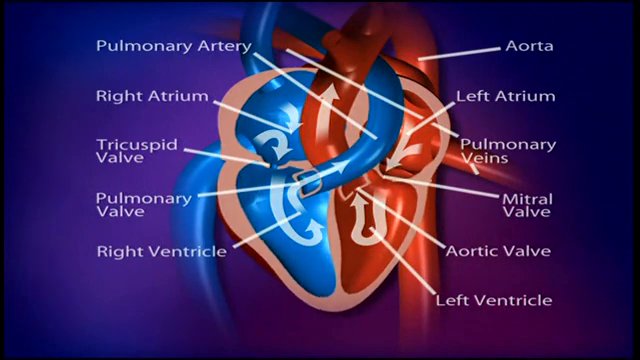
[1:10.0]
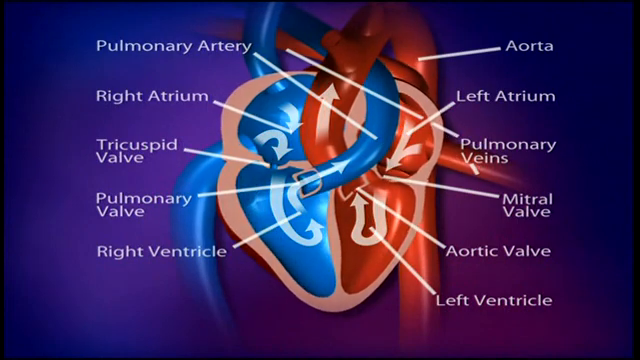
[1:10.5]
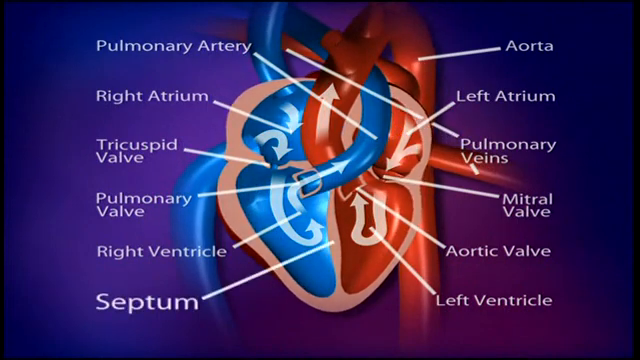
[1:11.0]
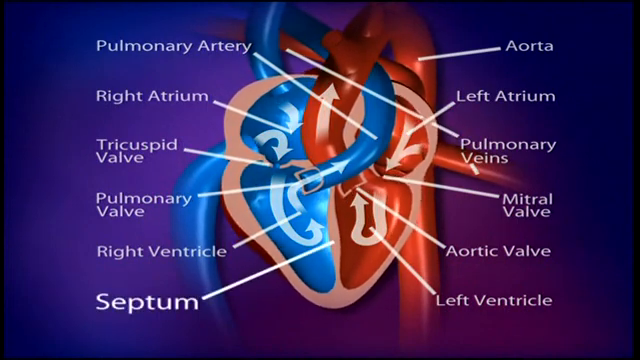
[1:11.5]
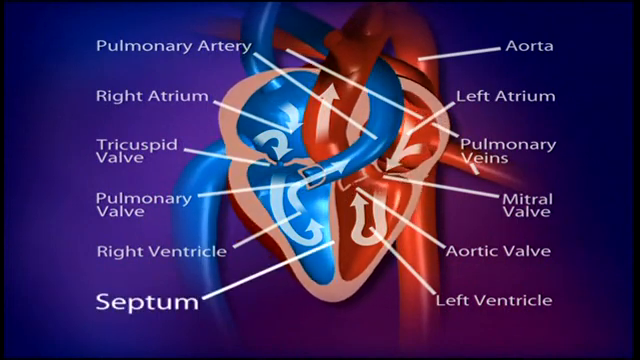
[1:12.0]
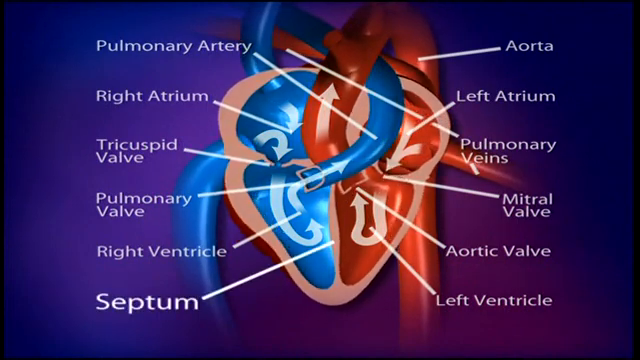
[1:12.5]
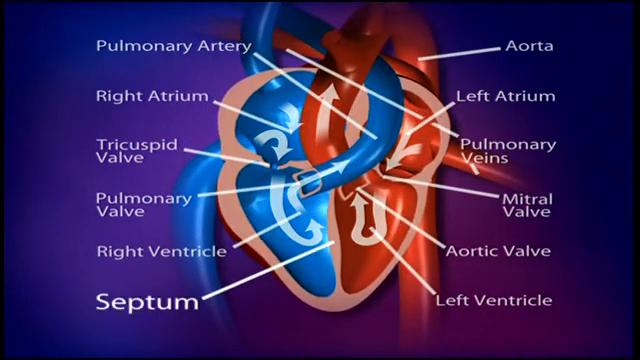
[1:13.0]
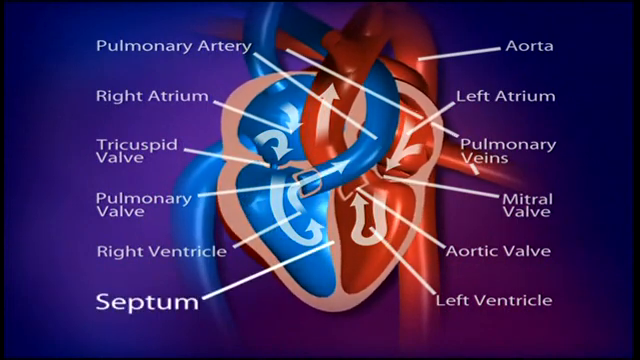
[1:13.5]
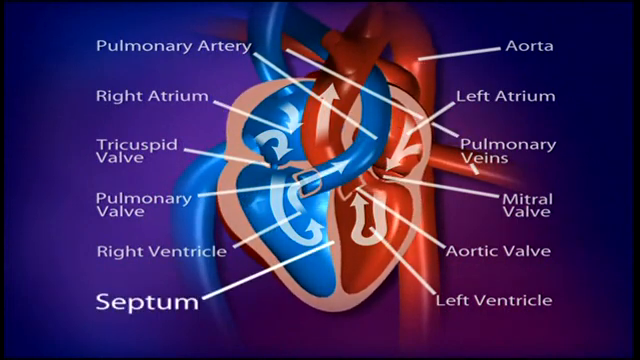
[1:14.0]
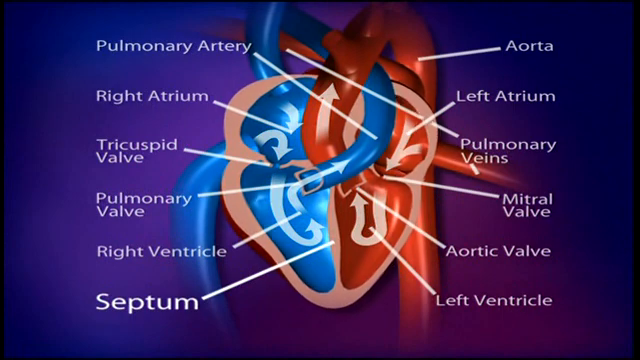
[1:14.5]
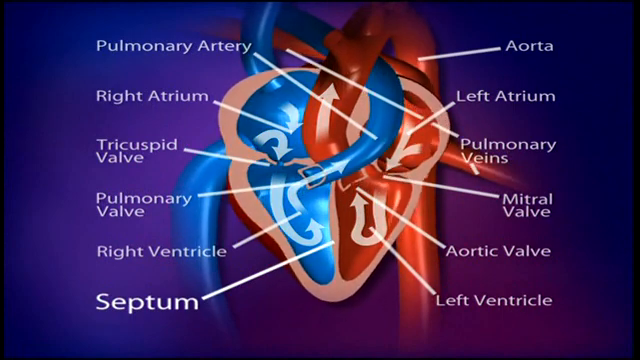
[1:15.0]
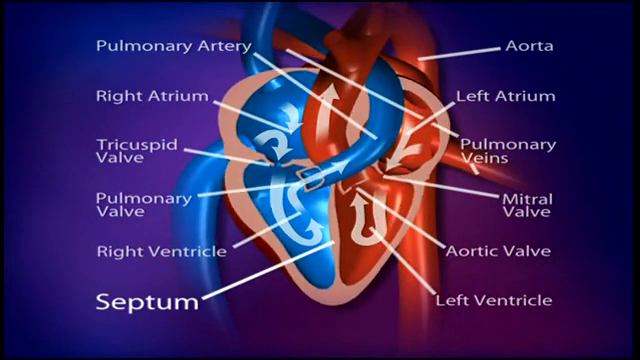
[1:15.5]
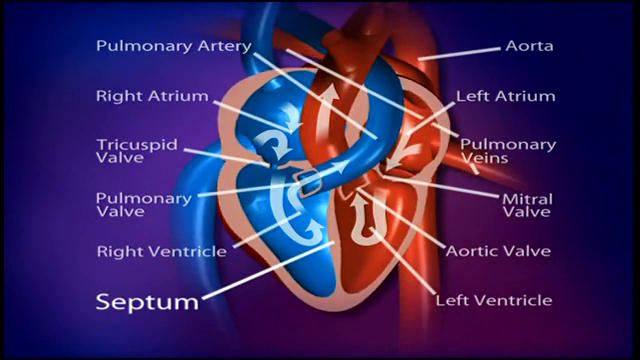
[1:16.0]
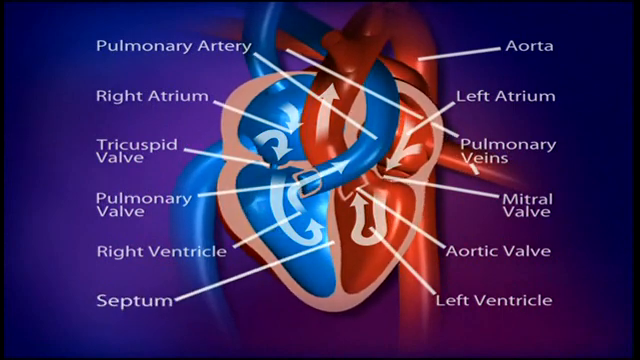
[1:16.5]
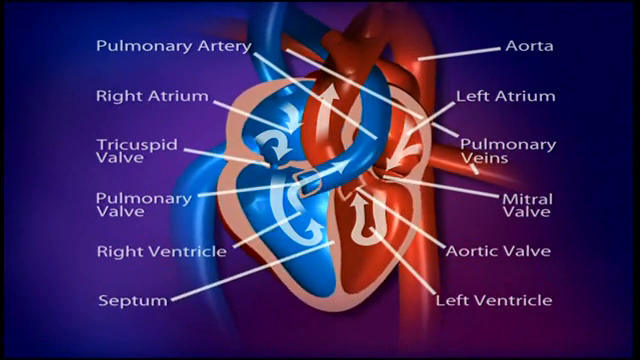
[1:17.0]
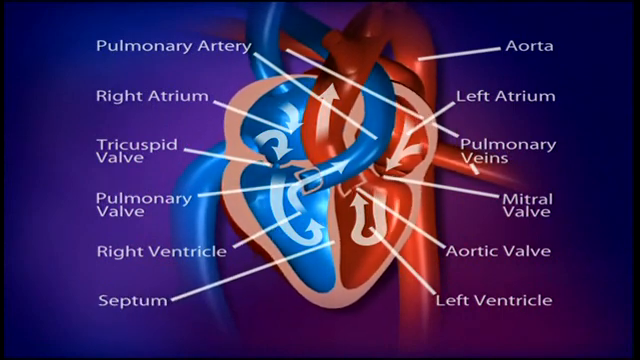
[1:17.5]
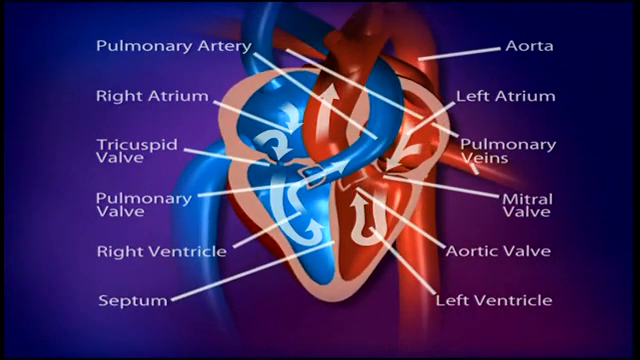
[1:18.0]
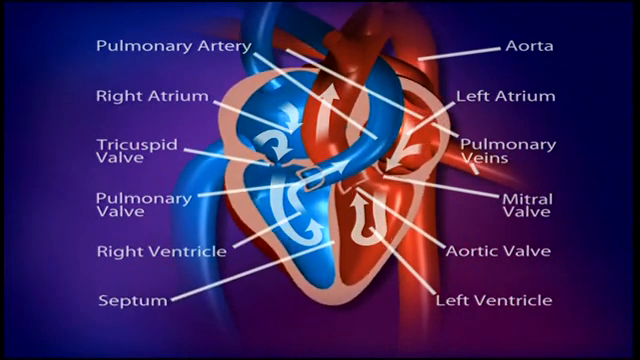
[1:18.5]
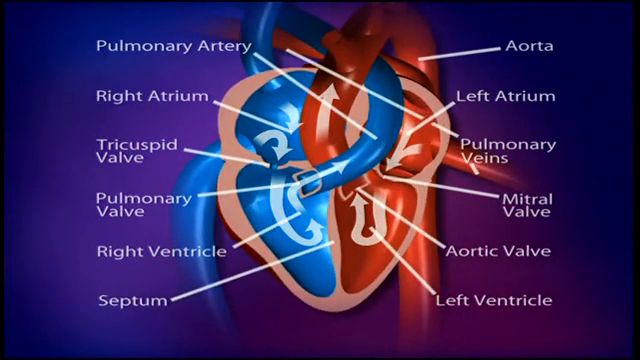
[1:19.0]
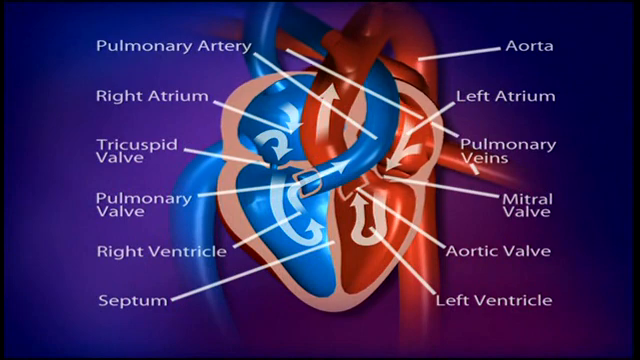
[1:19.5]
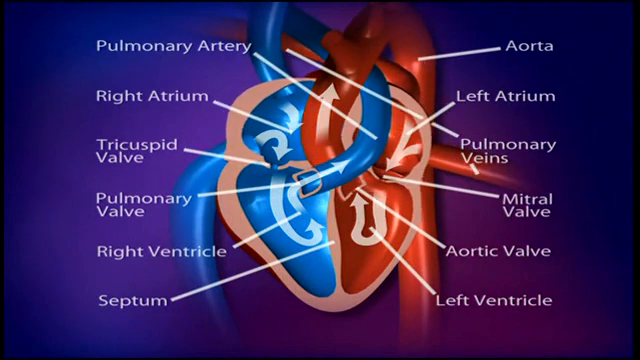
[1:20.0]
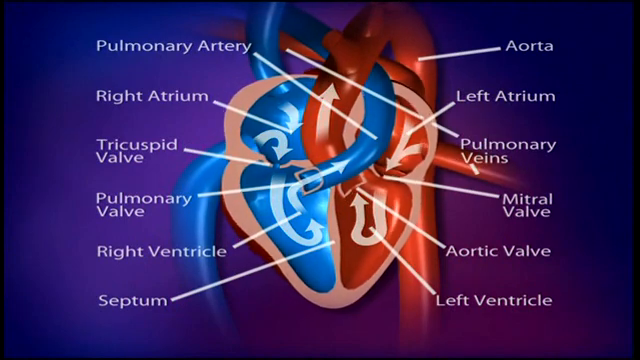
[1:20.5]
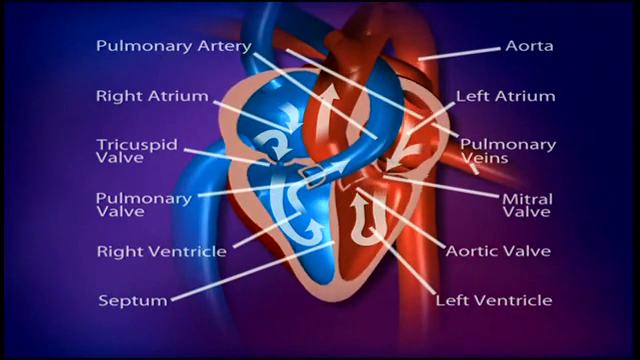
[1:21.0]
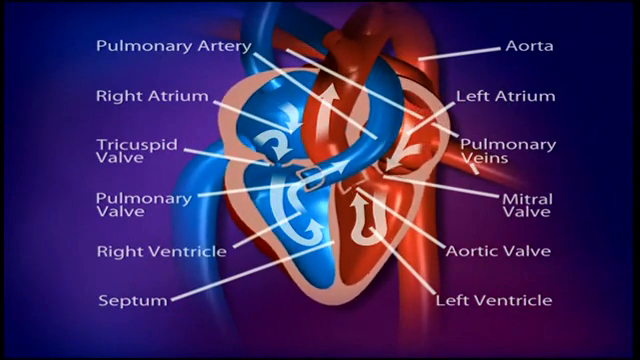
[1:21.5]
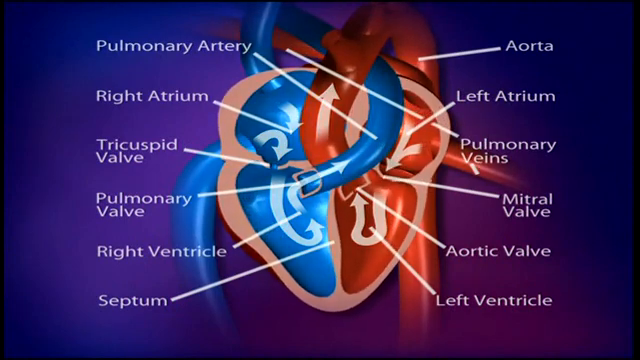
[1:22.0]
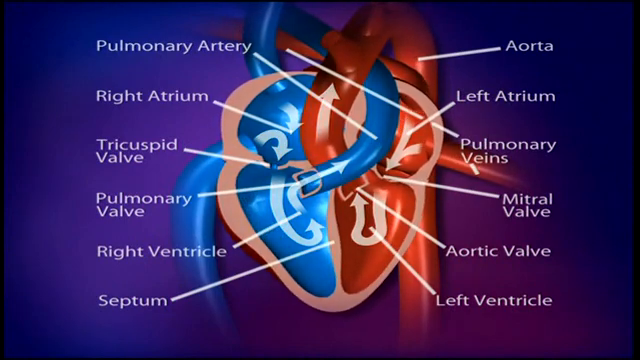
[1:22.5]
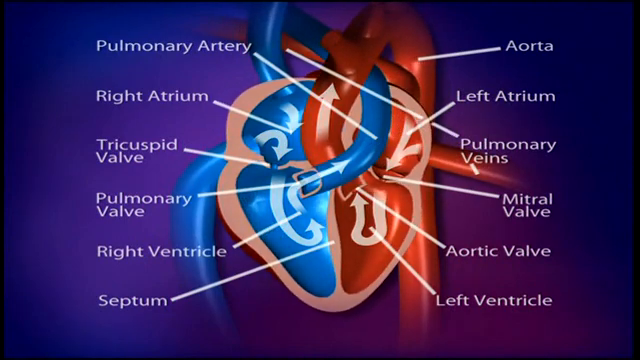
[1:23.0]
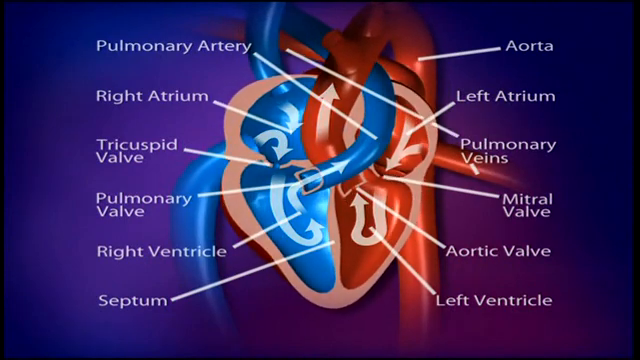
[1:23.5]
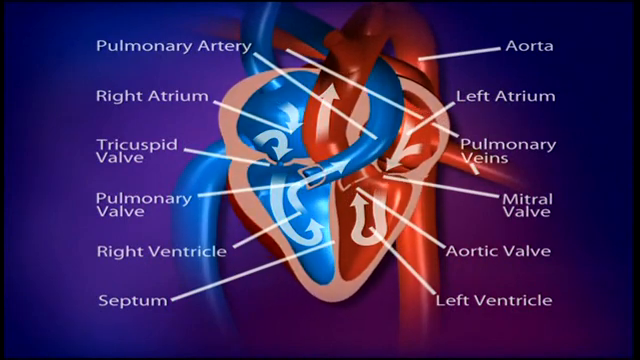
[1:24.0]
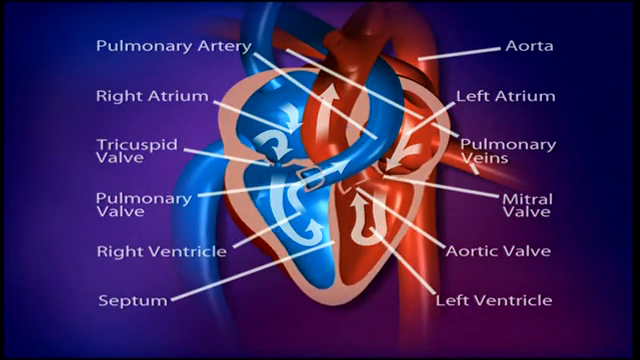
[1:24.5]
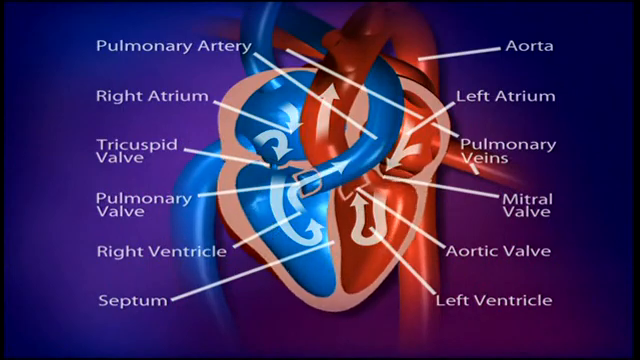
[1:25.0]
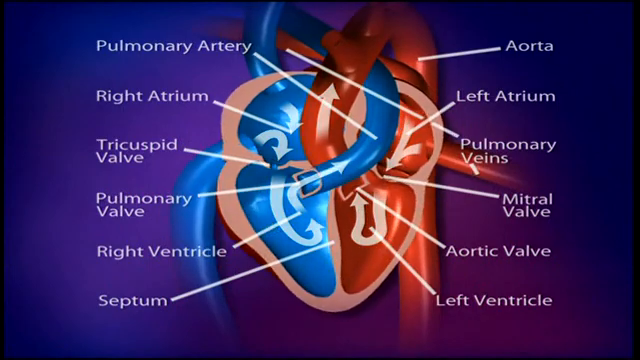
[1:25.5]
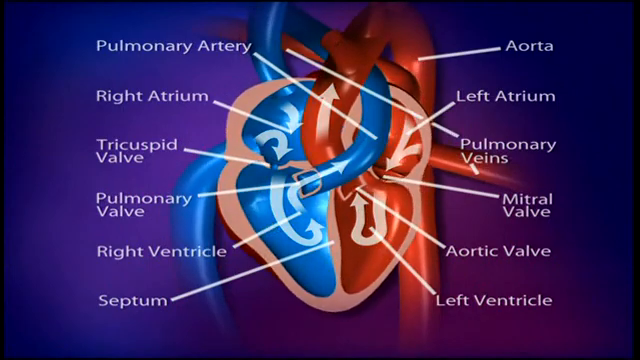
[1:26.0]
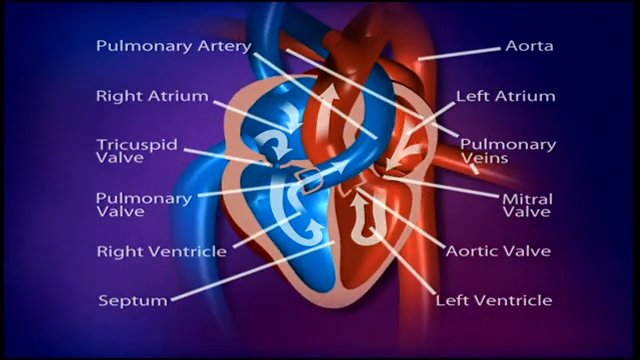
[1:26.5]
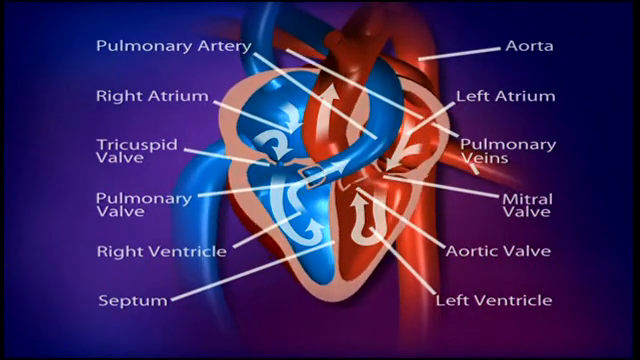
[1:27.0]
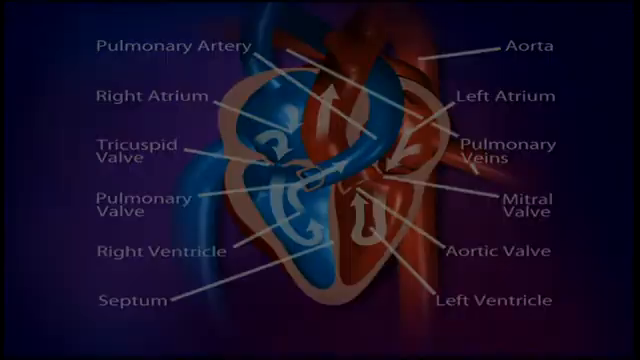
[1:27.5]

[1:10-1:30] All of the parts of the heart are labeled. The heart moves along with its connected arteries and veins, in a pumping motion that comes from the top and from the bottom at different intervals.